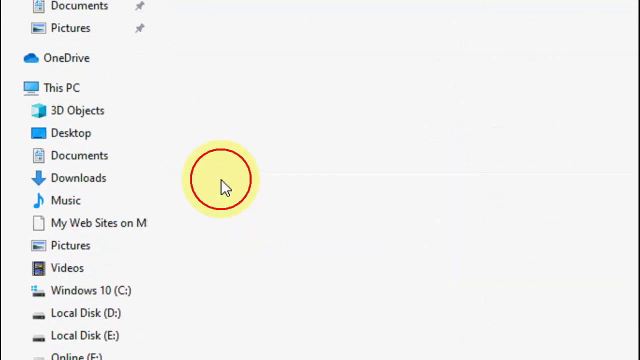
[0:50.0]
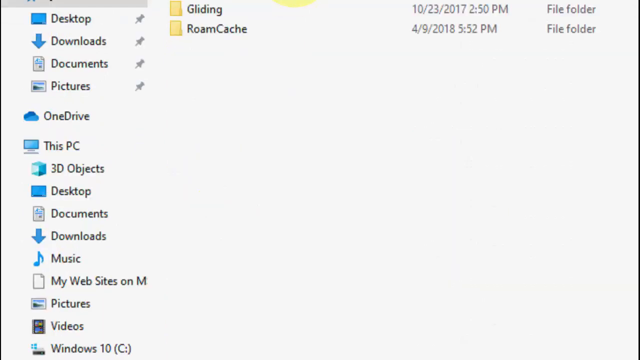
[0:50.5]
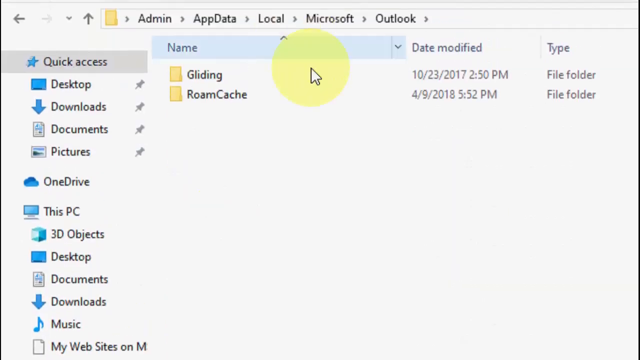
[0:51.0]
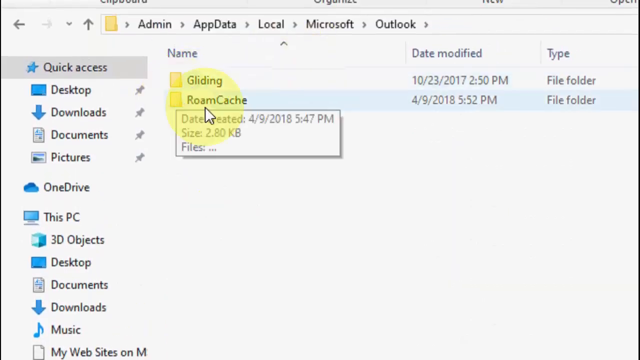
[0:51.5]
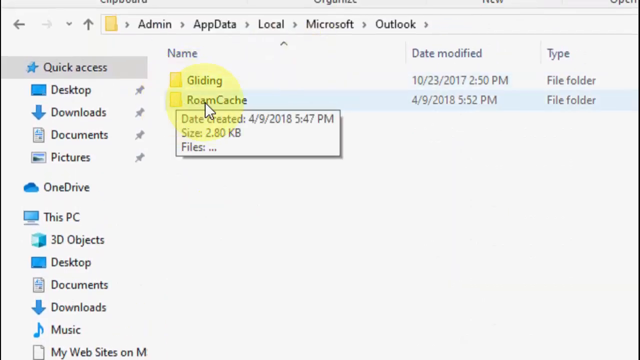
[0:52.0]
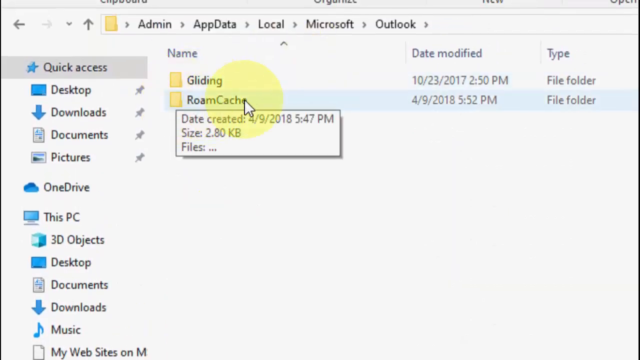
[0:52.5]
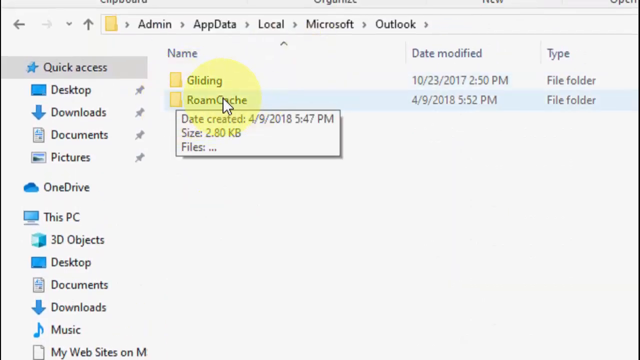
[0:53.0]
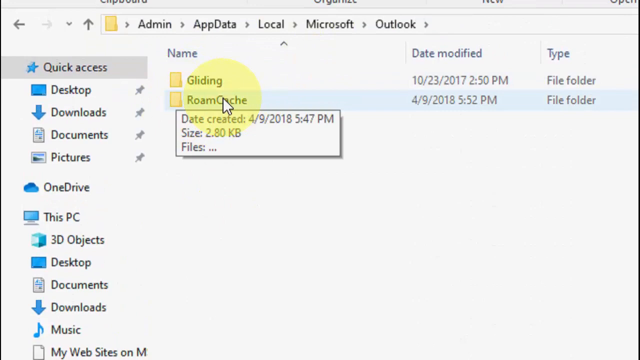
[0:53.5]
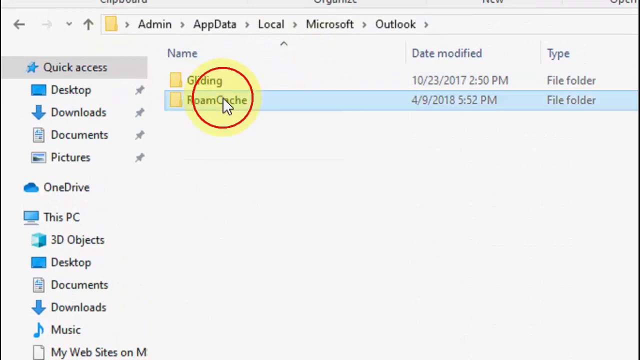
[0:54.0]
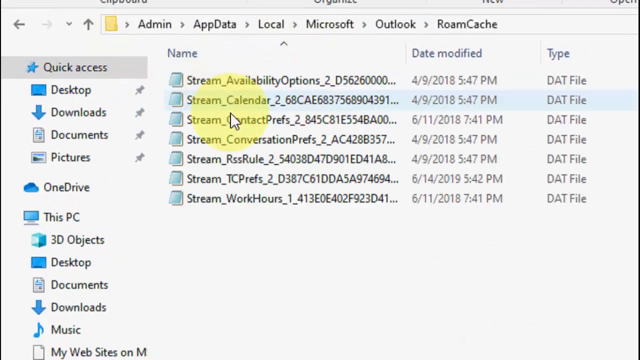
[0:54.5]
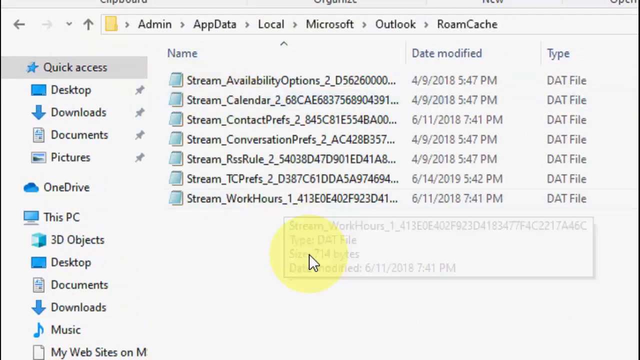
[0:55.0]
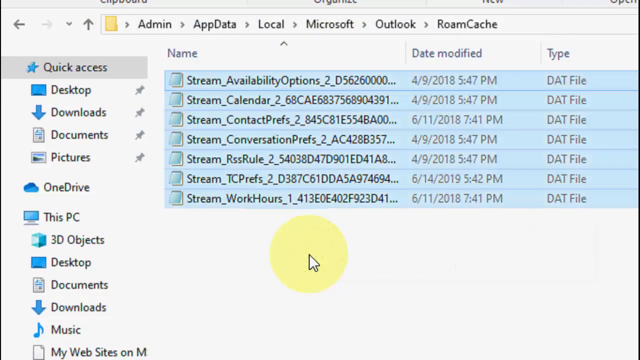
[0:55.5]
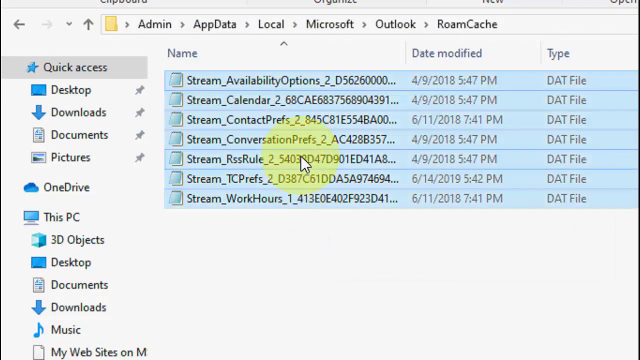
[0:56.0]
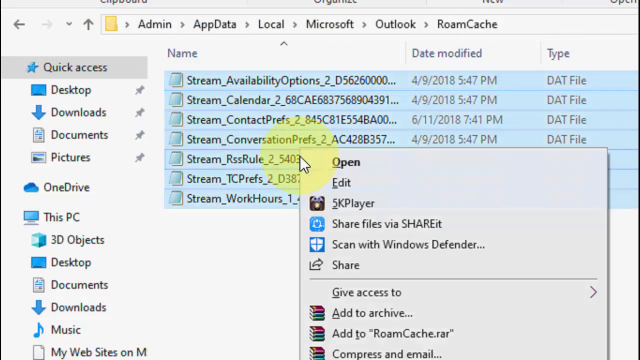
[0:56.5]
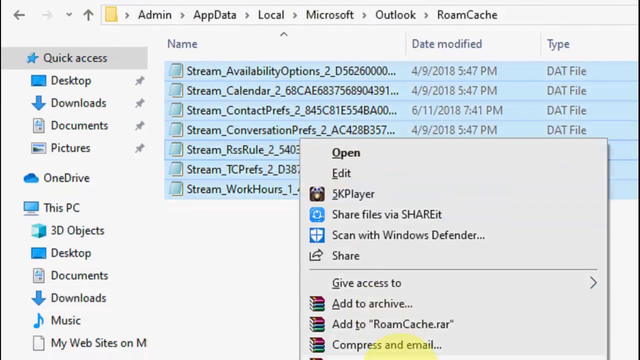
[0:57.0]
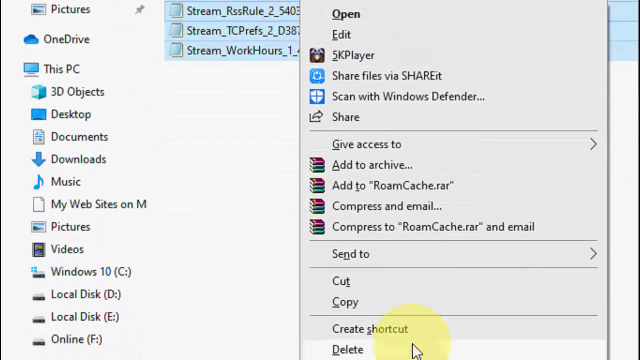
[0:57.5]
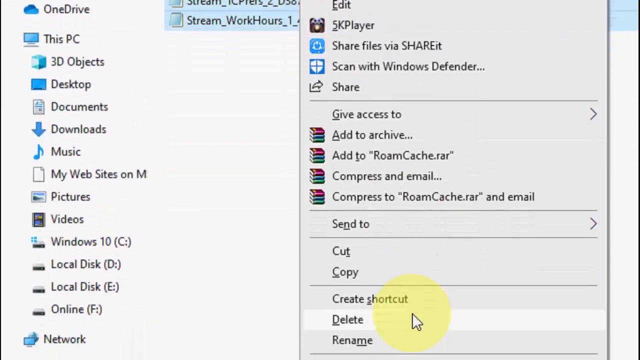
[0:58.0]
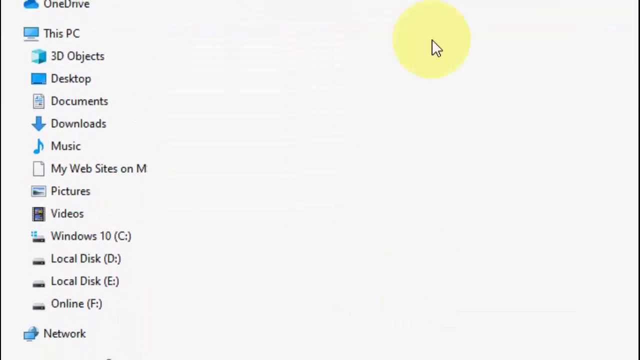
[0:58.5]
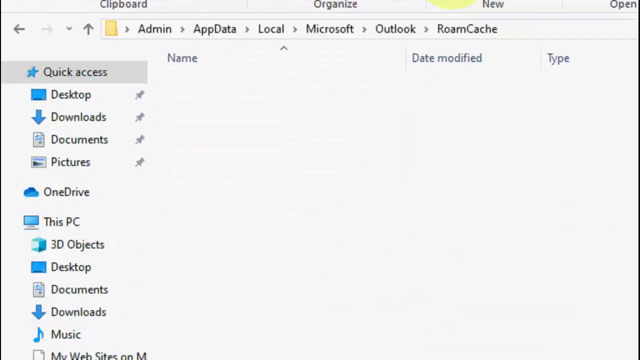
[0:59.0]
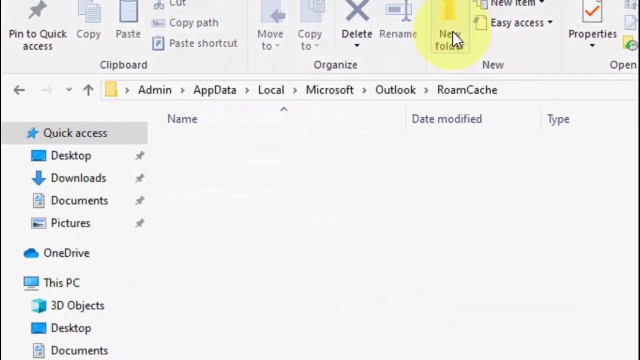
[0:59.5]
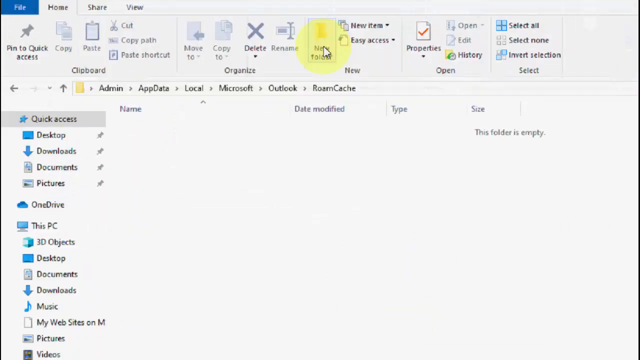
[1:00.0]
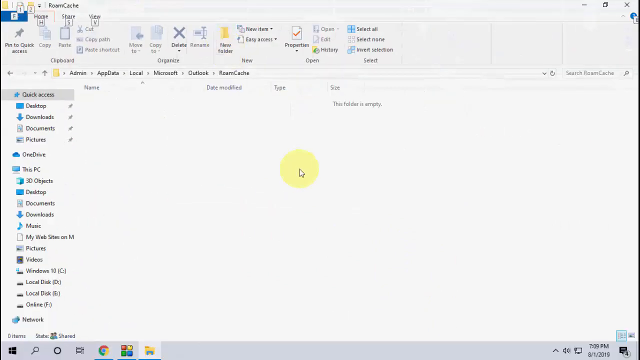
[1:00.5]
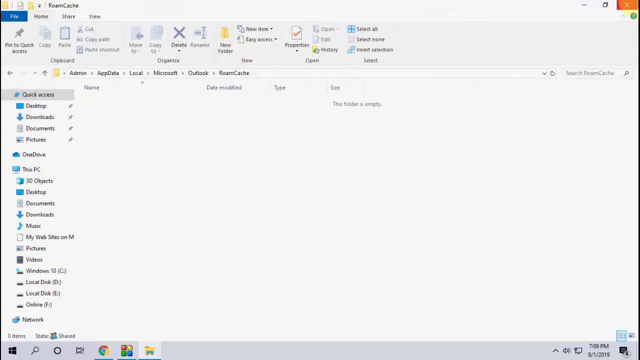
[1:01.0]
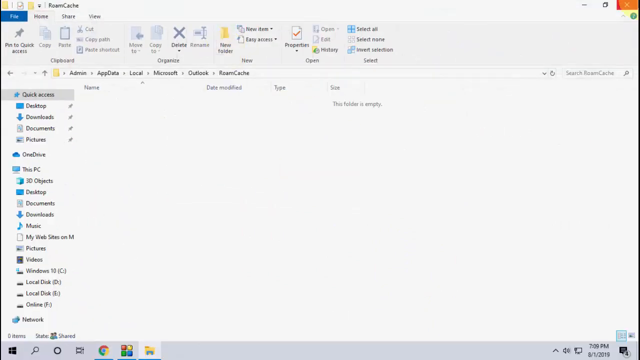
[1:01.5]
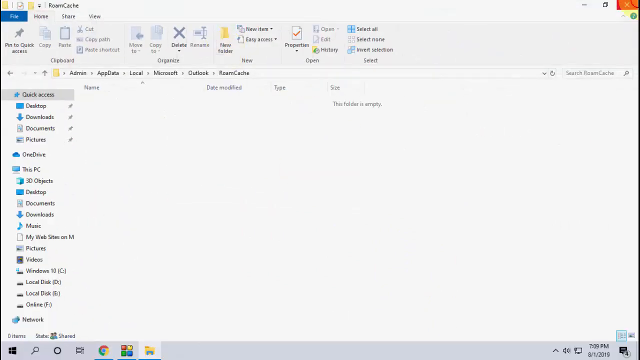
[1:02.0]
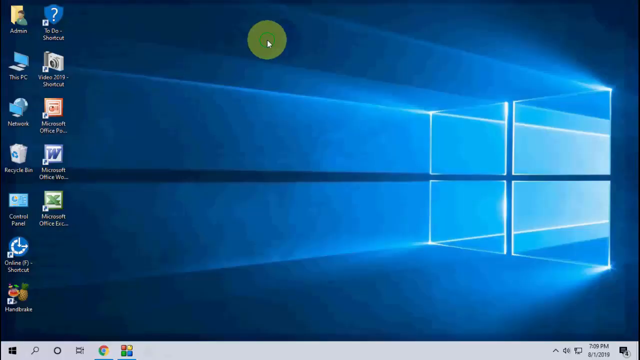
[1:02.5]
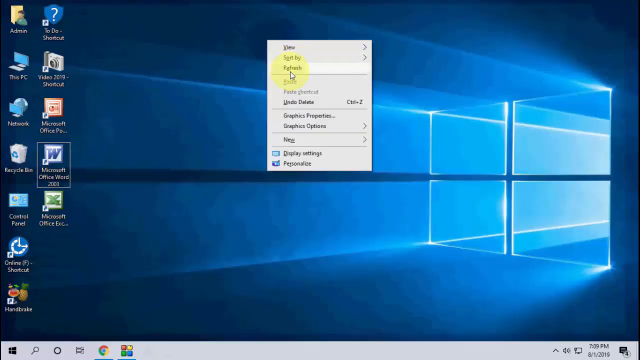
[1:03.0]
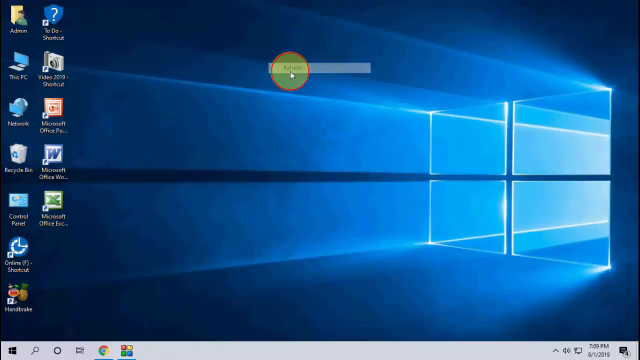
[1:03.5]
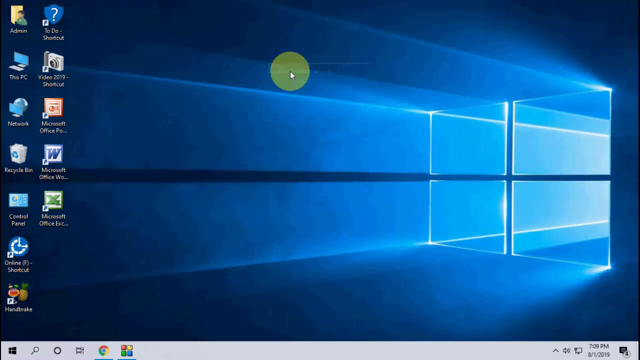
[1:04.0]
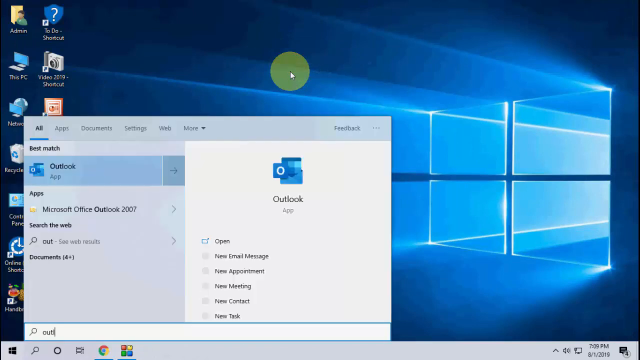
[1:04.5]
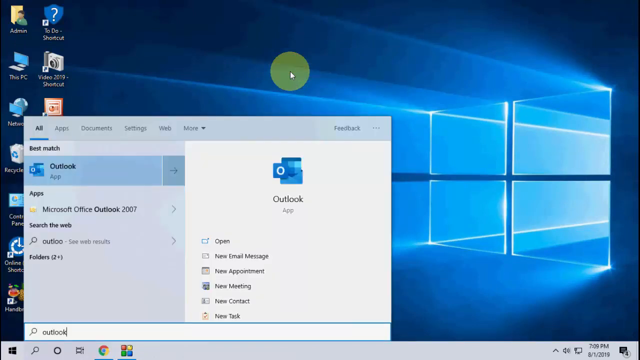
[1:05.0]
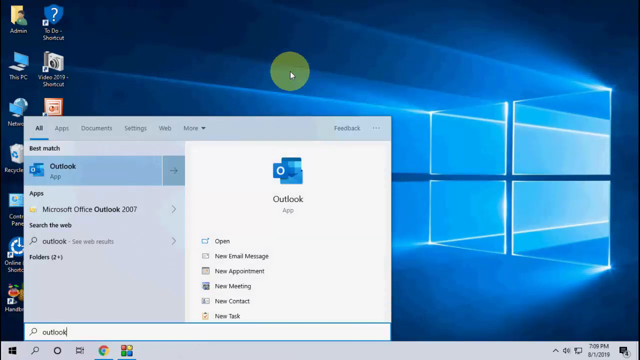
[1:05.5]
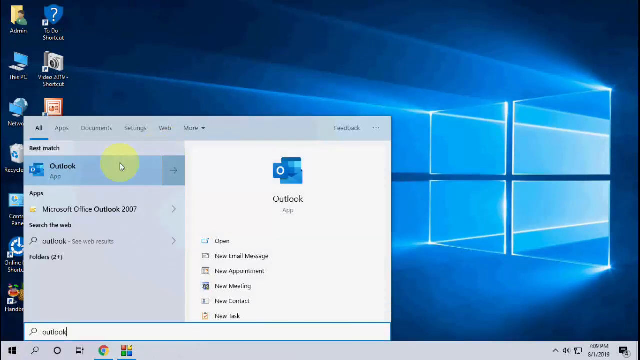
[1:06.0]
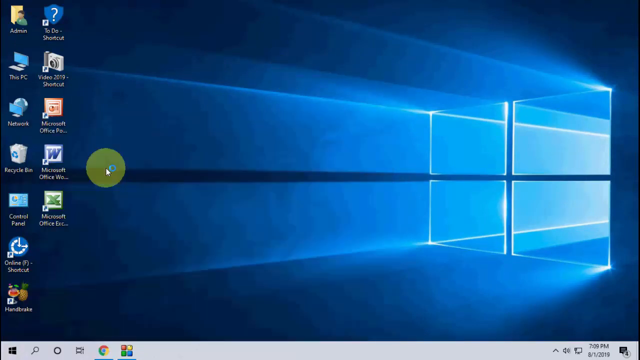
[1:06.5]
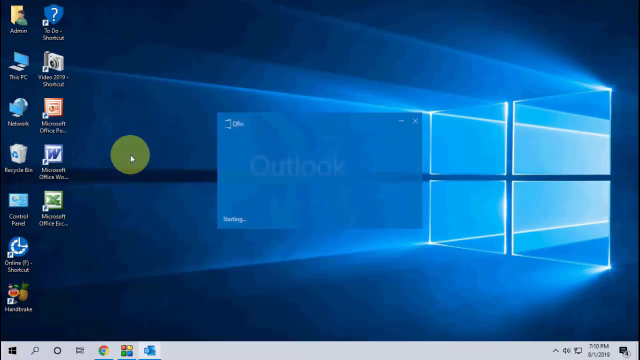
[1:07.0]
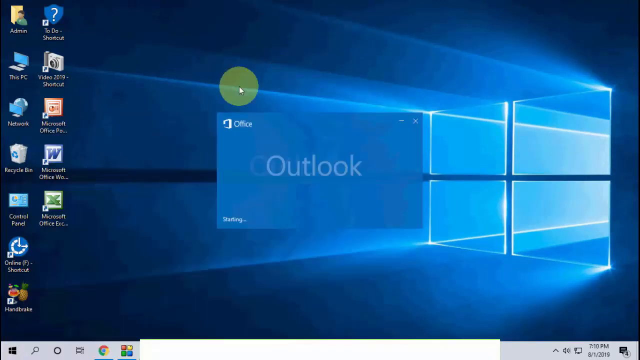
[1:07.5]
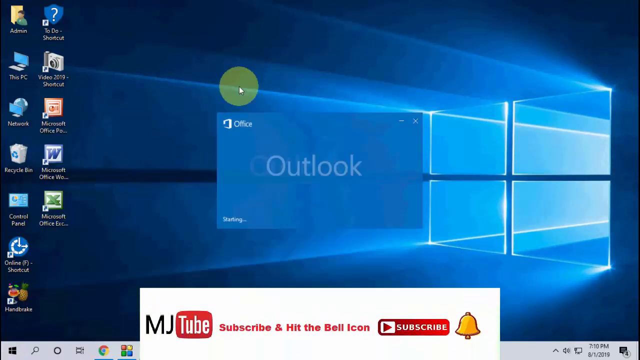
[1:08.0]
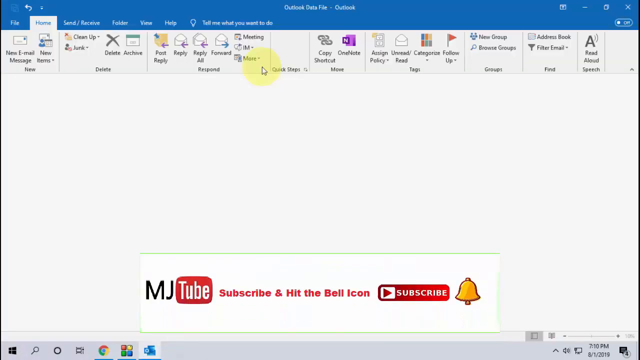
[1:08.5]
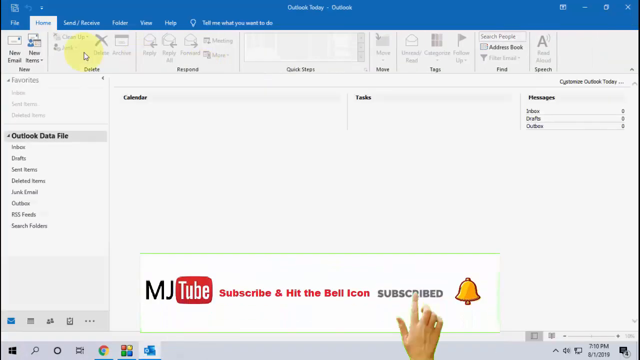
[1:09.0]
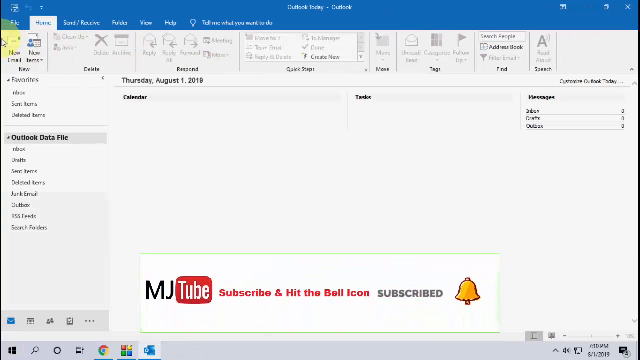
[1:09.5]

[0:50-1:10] A mouse icon with a yellow highlighter around it moves around on the page, highlighting everything it passes and a larger area around it. At the top, the path it used to get here is shown: admin, app data, local, Microsoft, then Outlook. Two folders are visible, one labeled "Gliding" and one labeled "Roam Cache", and it highlights Roam Cache. When it highlights and apparently clicks it, a red circle expands around it. Multiple DAT files then show up, and it highlights all of them. It apparently right-clicks to bring up a box and chooses an option, seemingly to delete them. It then goes all the way to the top right and clicks a button, apparently to close the window. It then searches for Outlook on the computer and pulls the program up.